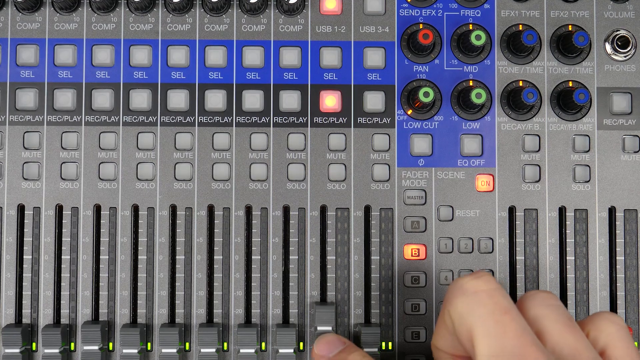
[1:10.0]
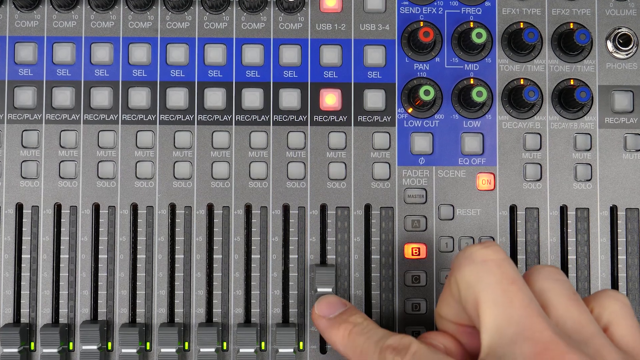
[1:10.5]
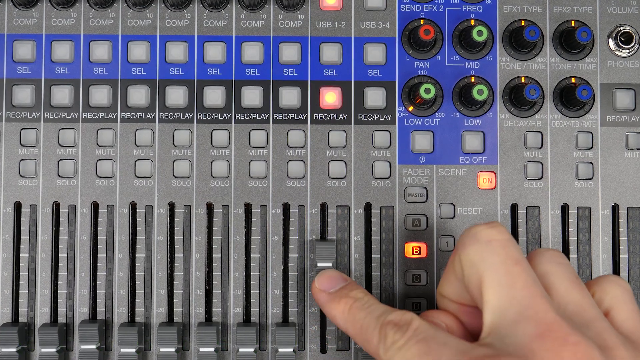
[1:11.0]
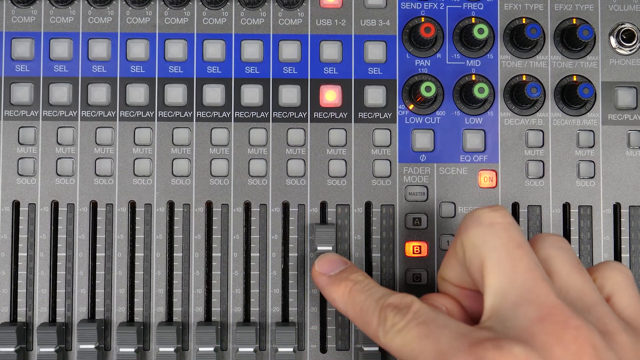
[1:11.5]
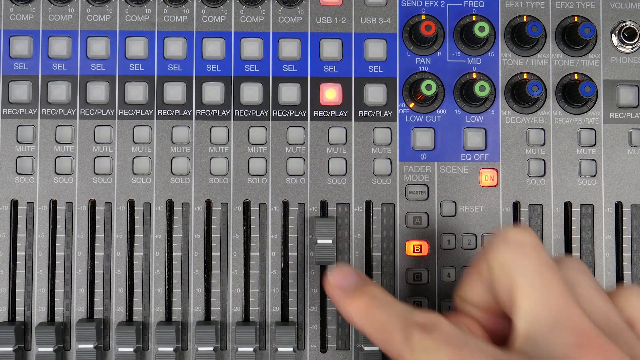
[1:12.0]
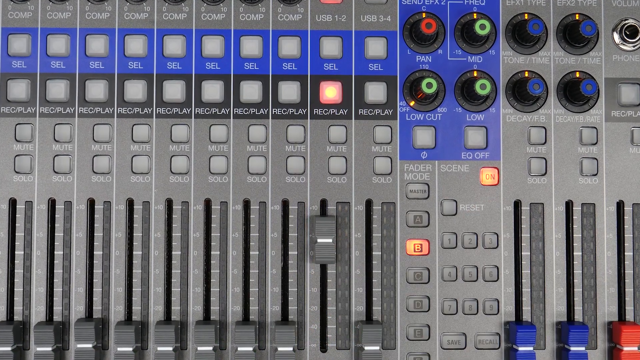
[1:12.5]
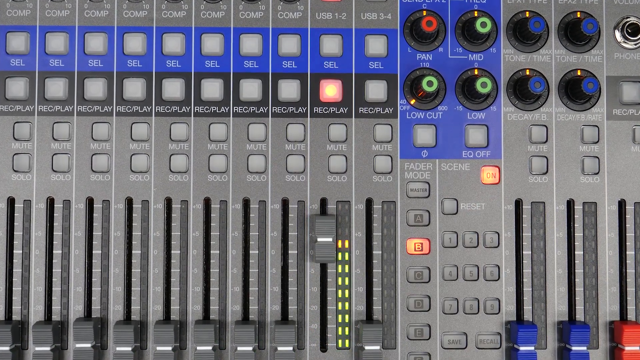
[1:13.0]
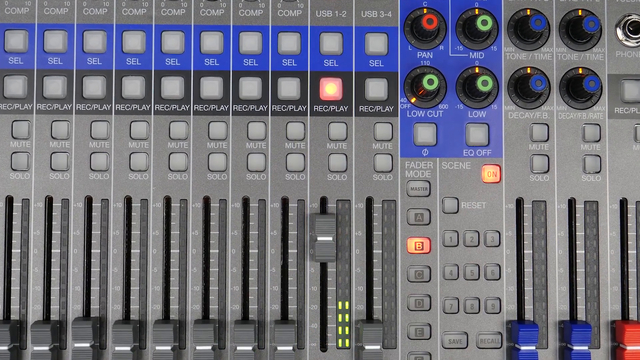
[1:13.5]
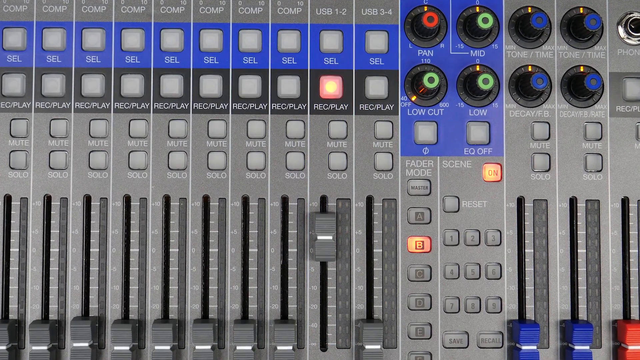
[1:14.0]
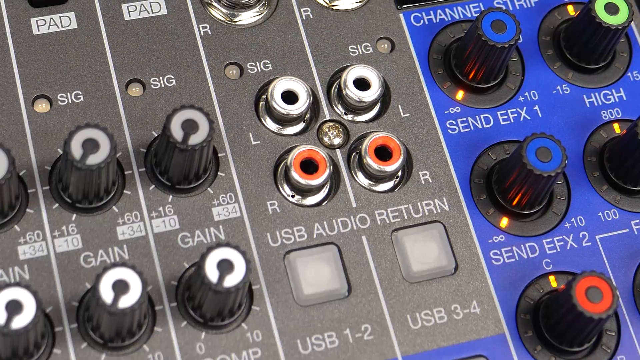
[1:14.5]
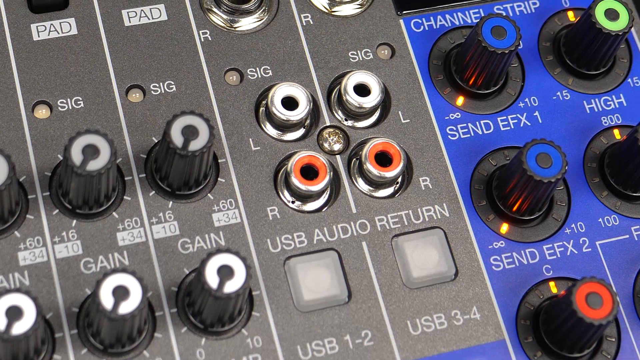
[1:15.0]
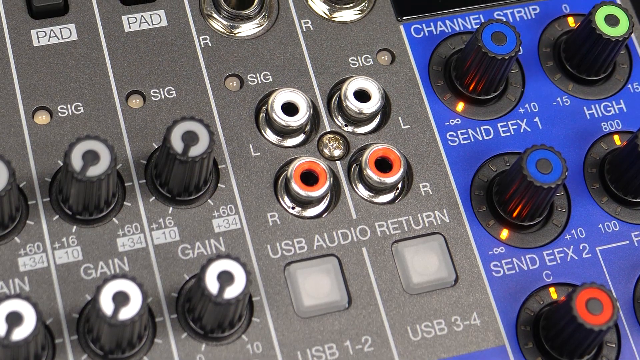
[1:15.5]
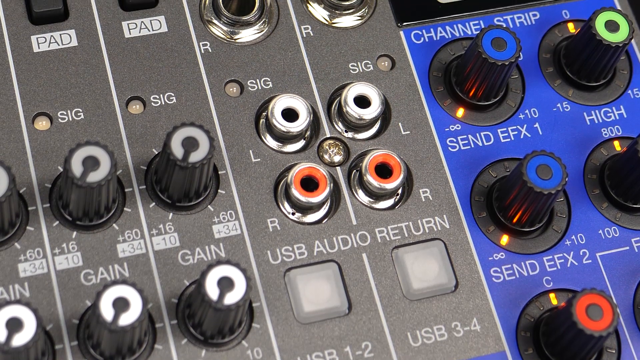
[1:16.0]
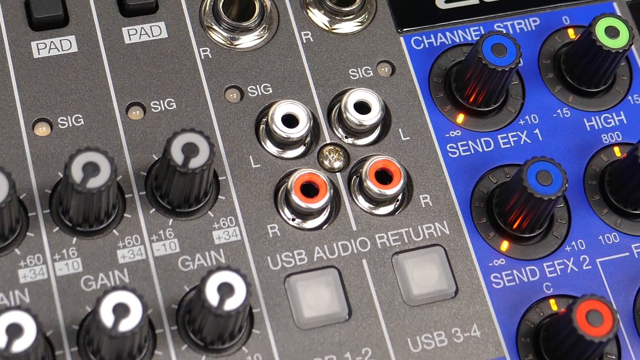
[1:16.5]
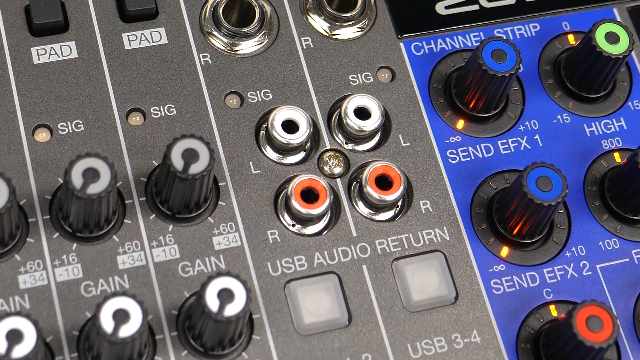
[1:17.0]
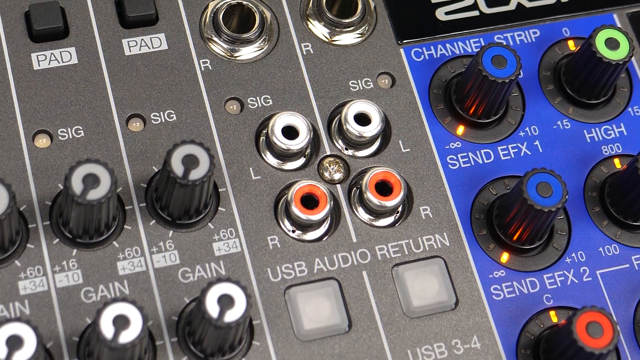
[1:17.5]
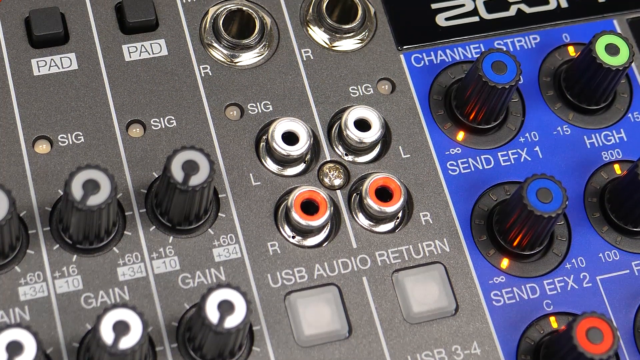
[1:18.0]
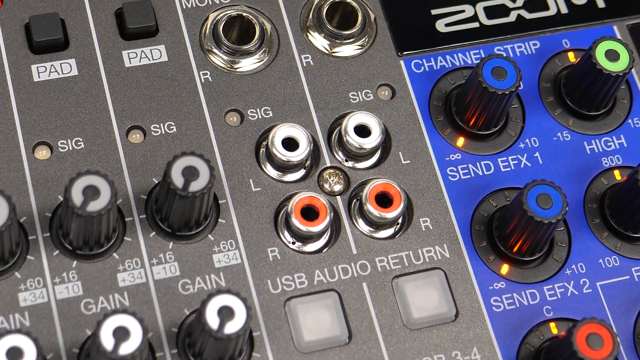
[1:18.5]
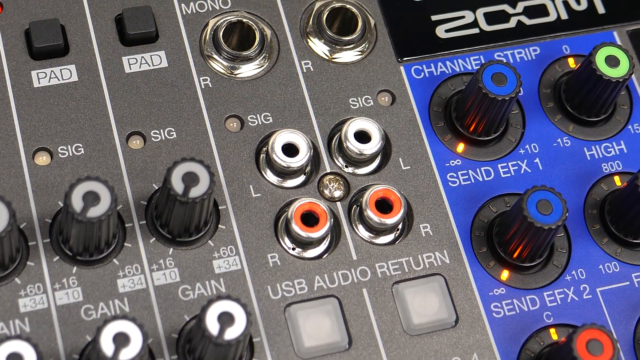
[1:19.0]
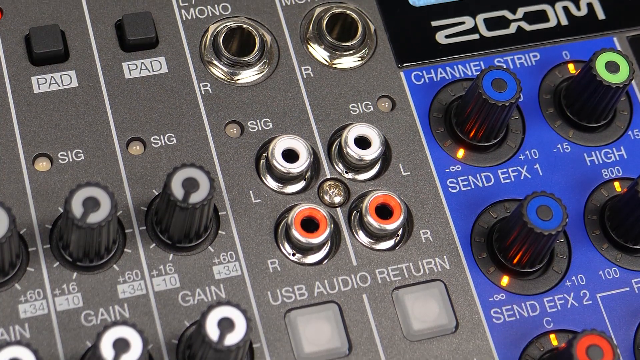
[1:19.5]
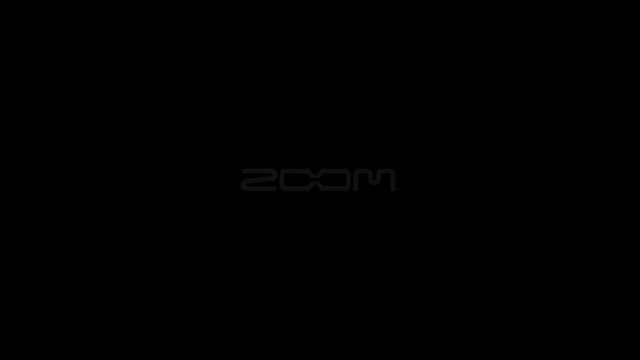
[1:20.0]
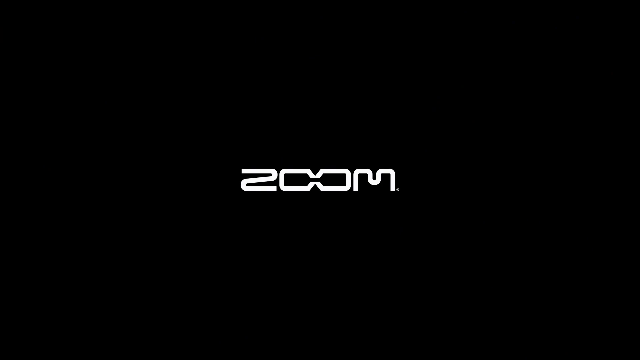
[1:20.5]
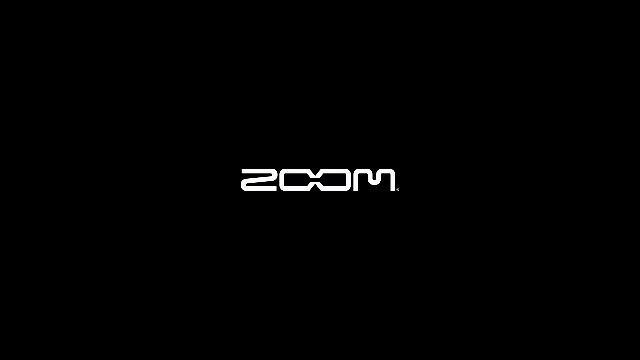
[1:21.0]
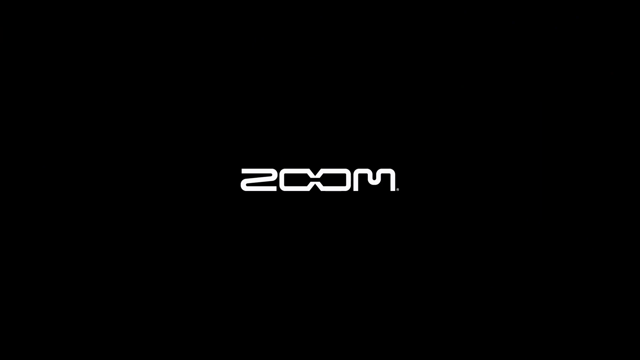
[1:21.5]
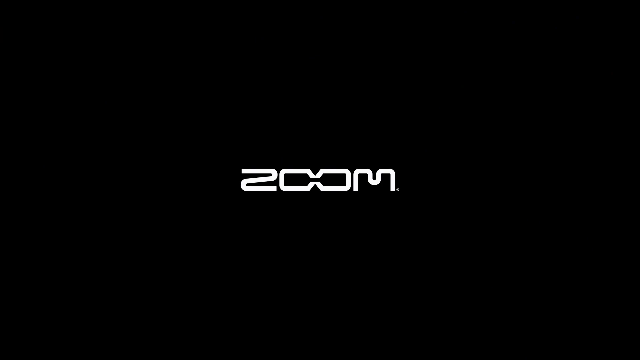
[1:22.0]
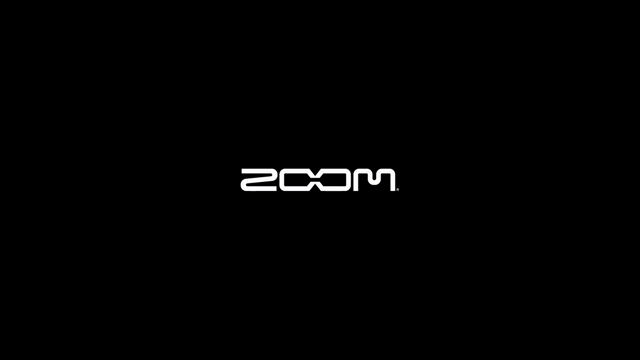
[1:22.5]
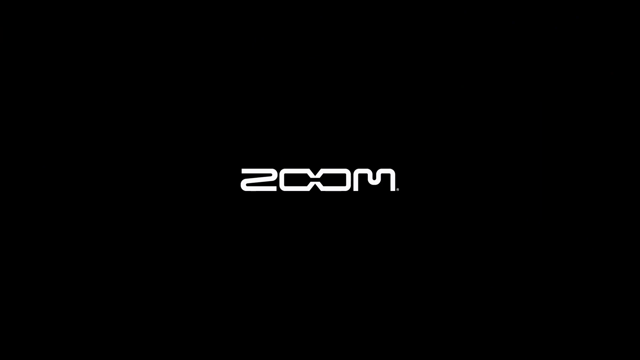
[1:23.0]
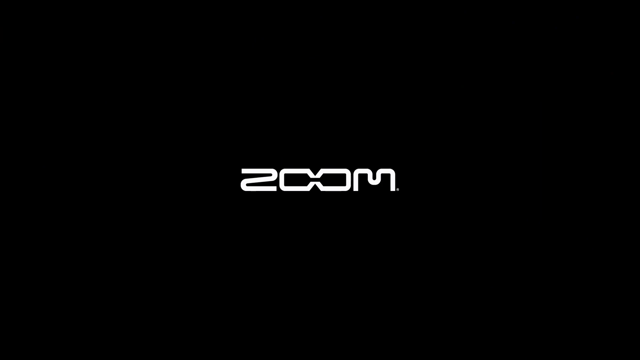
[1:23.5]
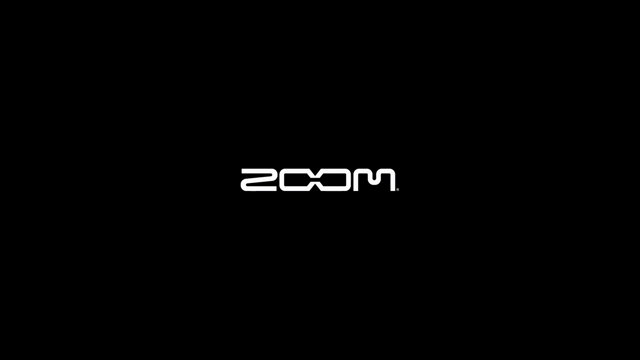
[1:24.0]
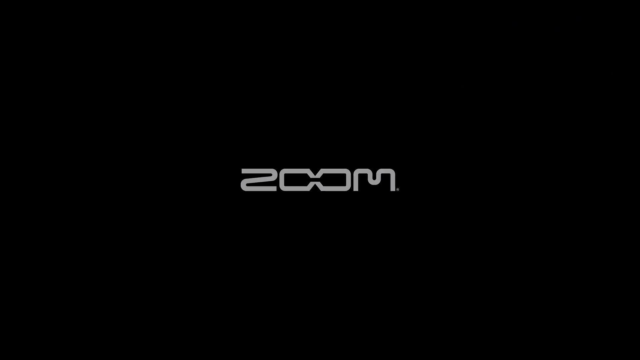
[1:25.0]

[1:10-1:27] A finger pushes up what looks like a volume control. "Zoom" appears on a black background. The person pushes up the switch, and more buttons are shown, including "USB audio return" and "channel setup". A gray switch is pushed up, and yellow lights flash beside it. More of the buttons are shown.